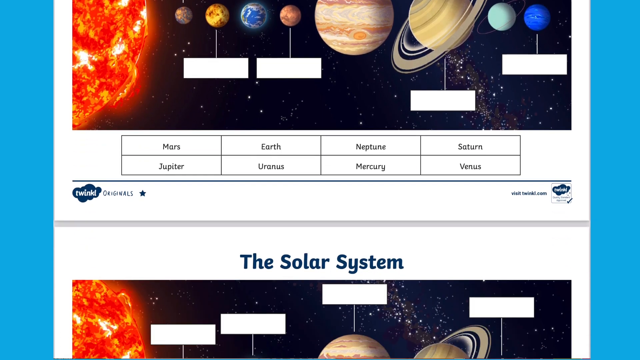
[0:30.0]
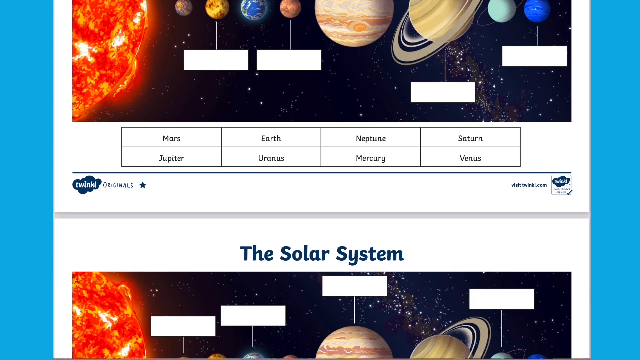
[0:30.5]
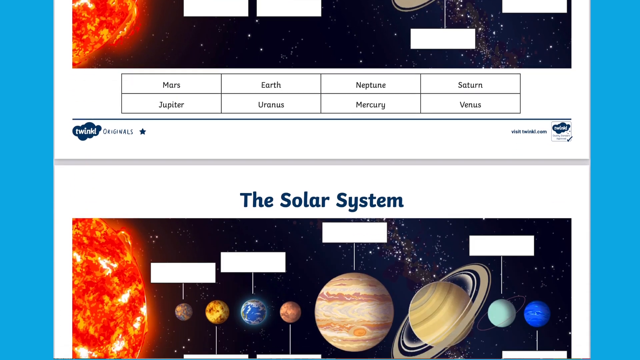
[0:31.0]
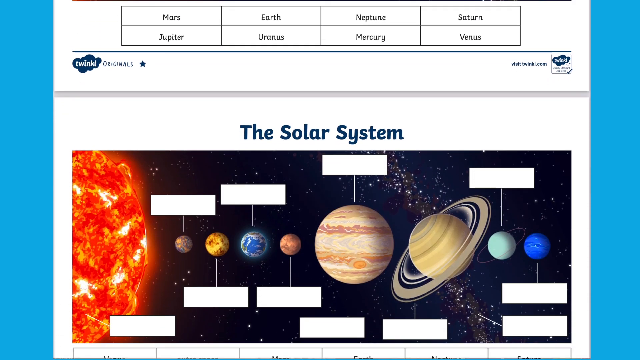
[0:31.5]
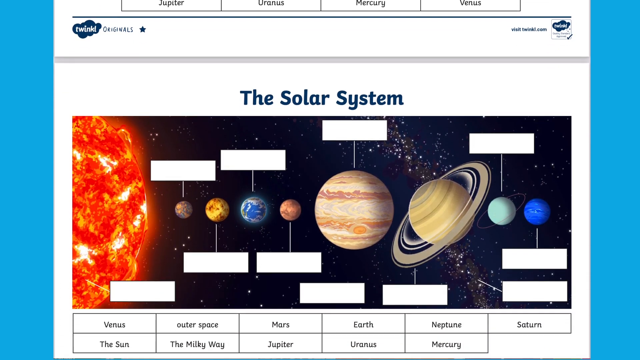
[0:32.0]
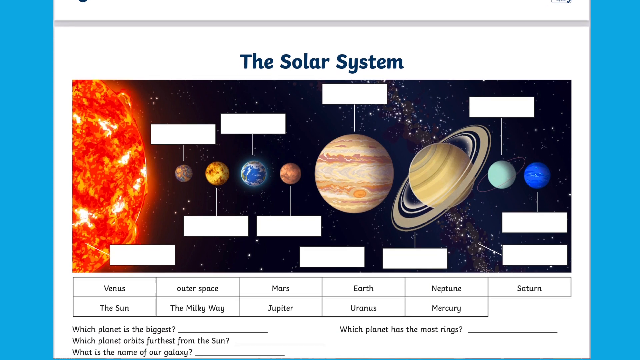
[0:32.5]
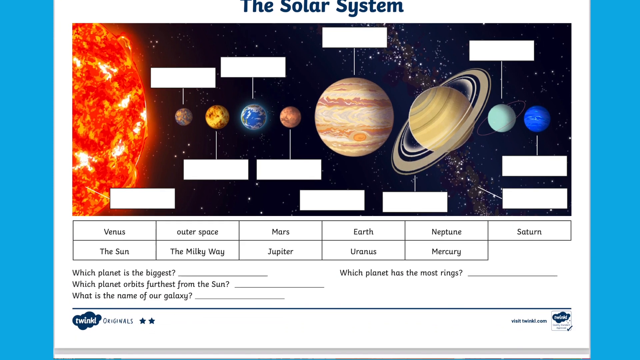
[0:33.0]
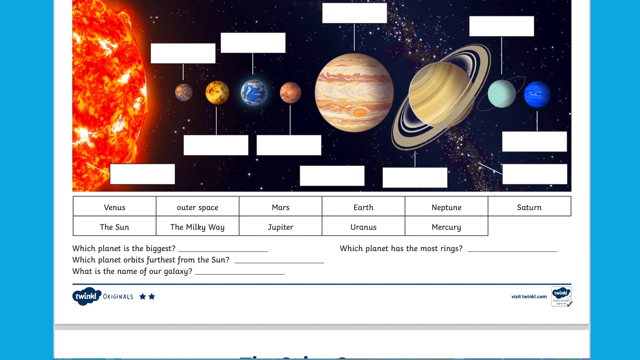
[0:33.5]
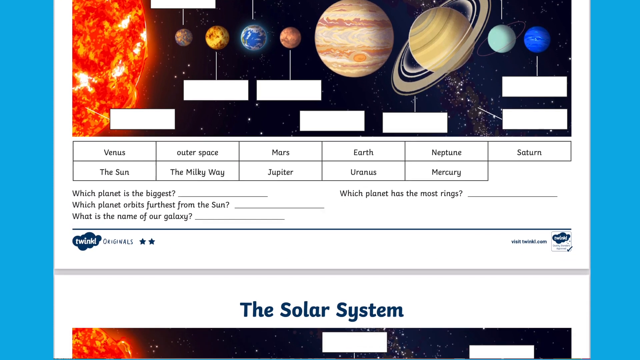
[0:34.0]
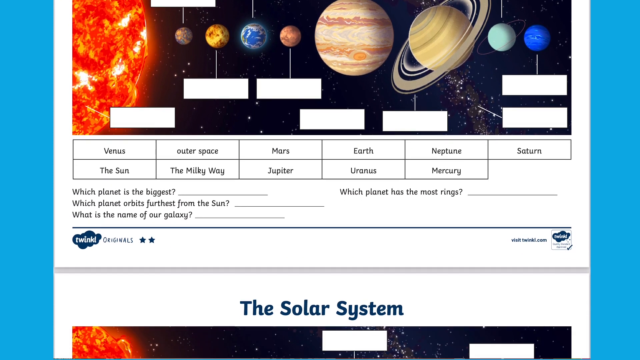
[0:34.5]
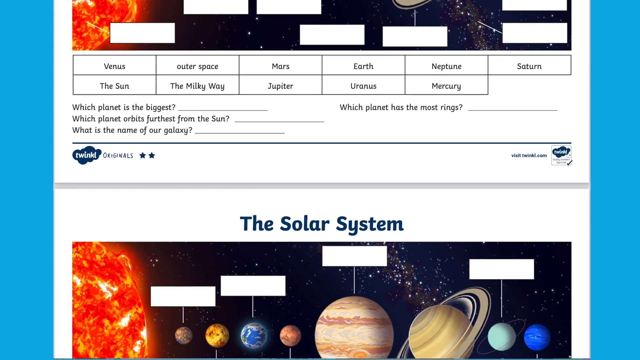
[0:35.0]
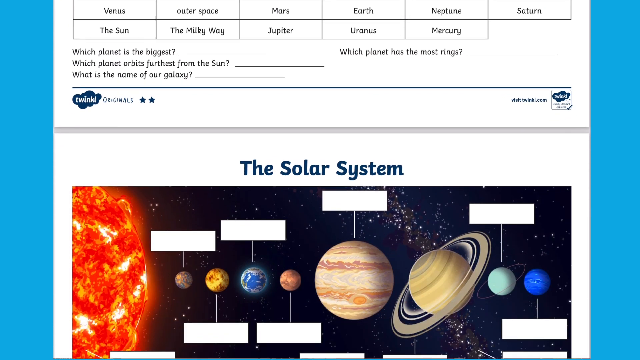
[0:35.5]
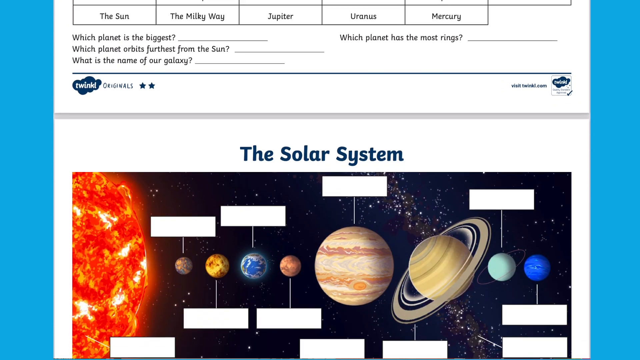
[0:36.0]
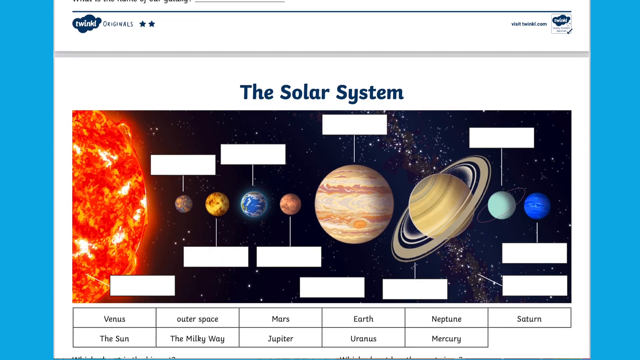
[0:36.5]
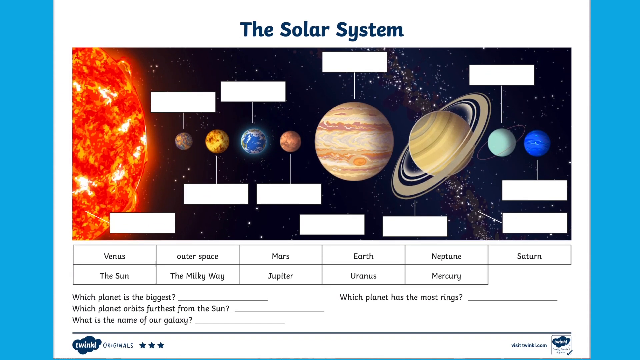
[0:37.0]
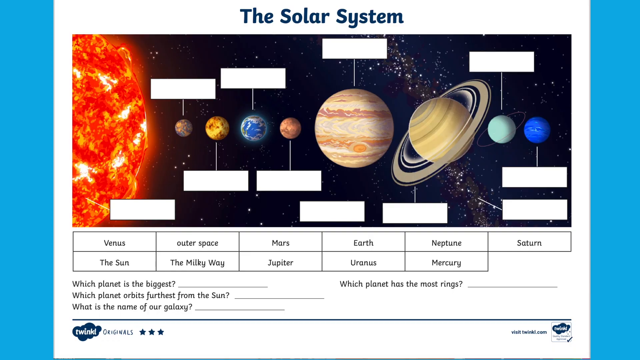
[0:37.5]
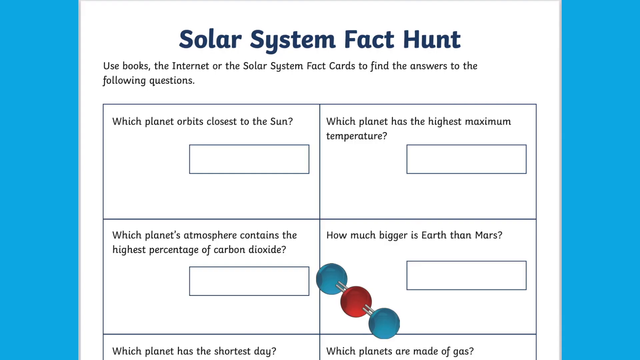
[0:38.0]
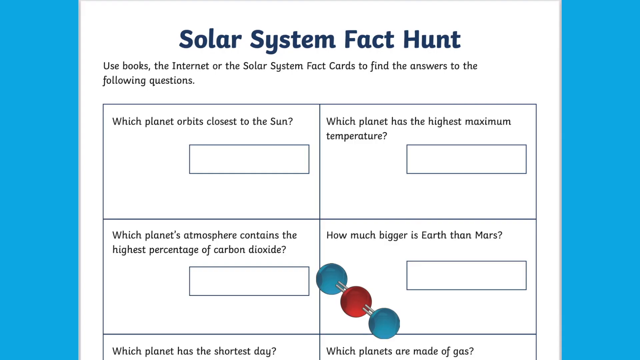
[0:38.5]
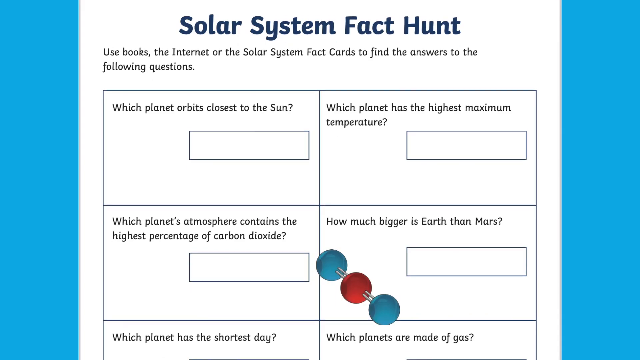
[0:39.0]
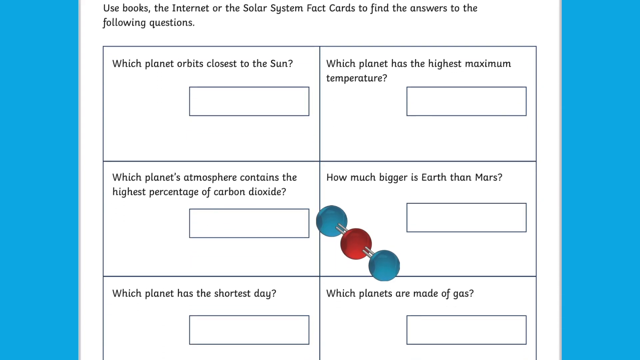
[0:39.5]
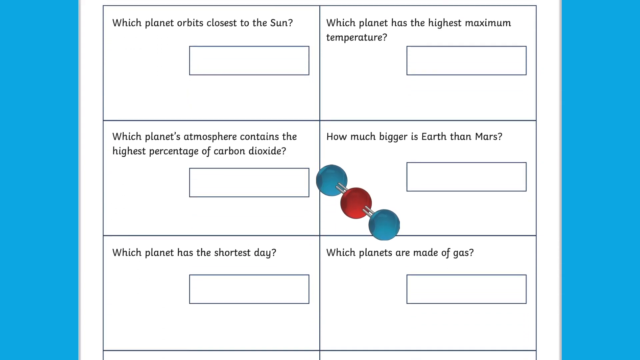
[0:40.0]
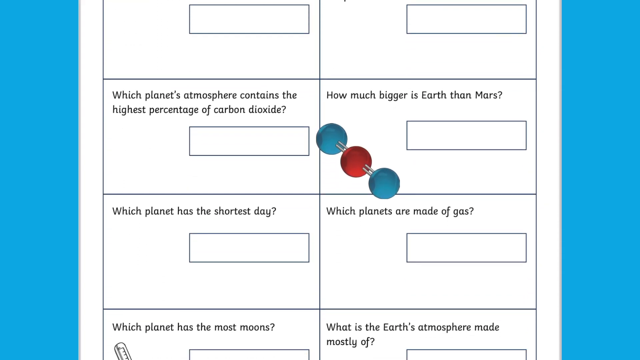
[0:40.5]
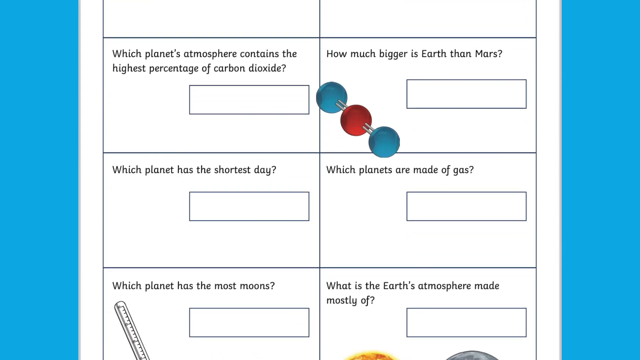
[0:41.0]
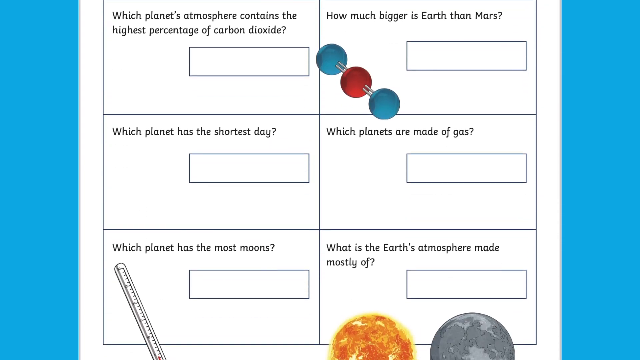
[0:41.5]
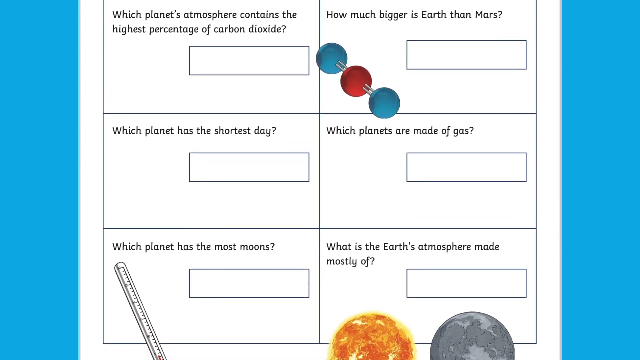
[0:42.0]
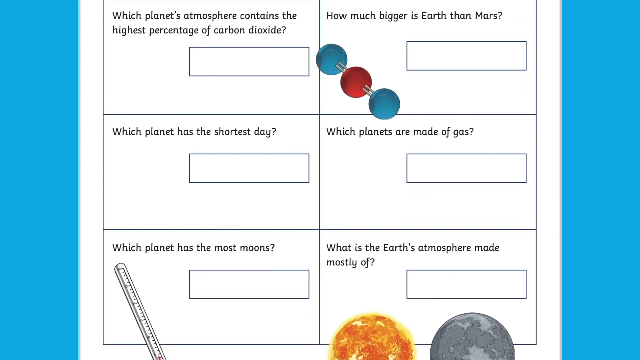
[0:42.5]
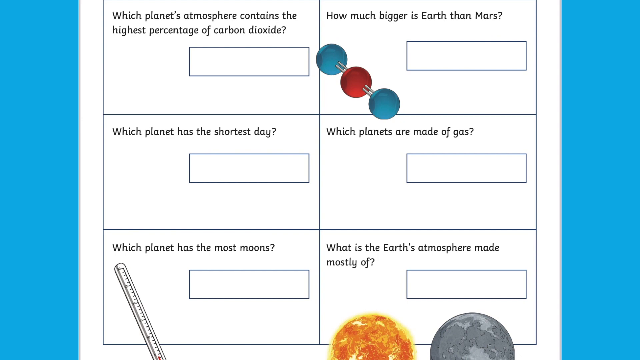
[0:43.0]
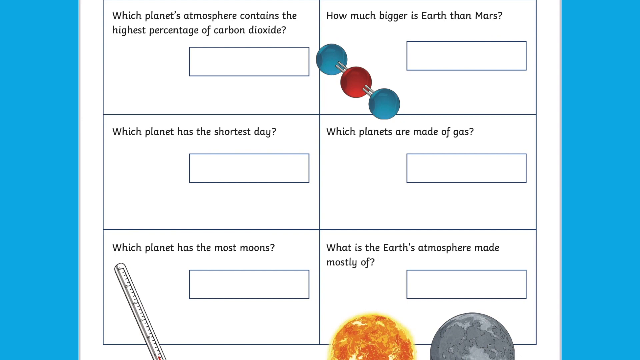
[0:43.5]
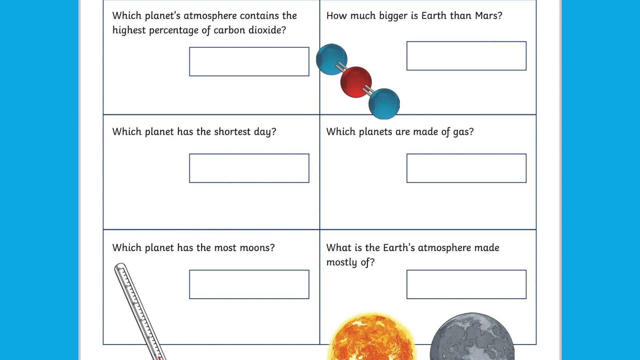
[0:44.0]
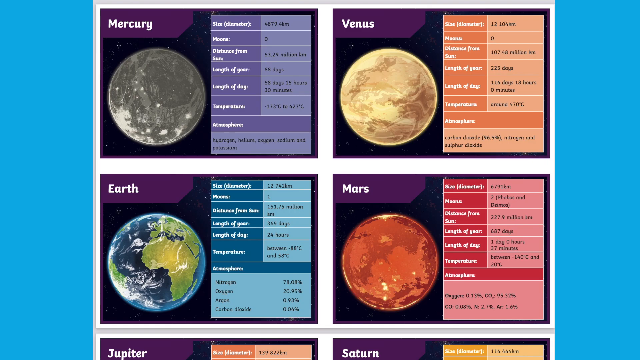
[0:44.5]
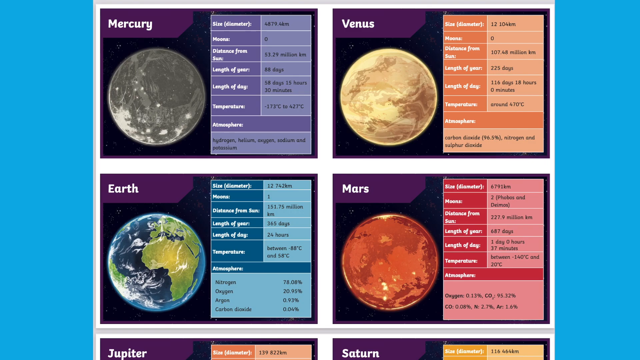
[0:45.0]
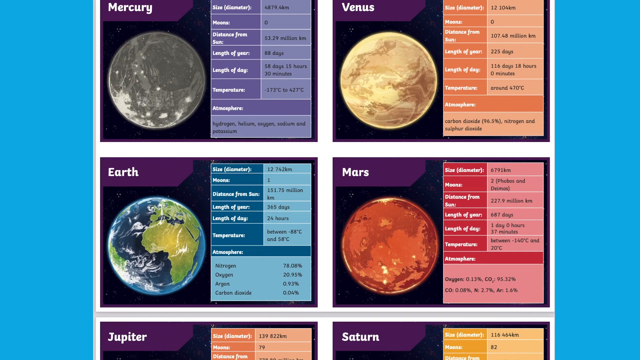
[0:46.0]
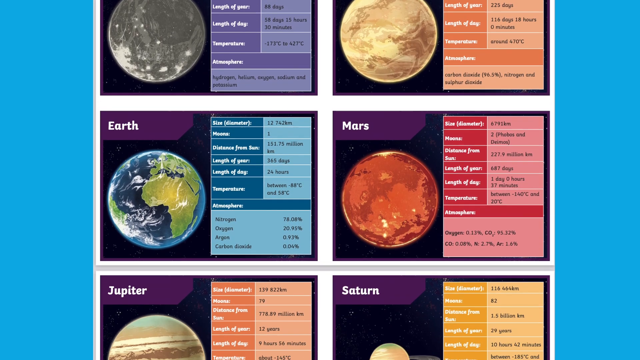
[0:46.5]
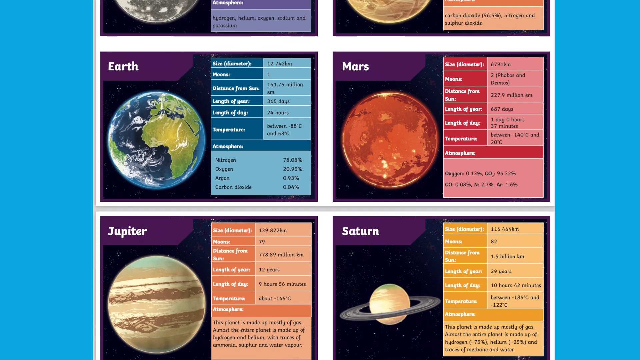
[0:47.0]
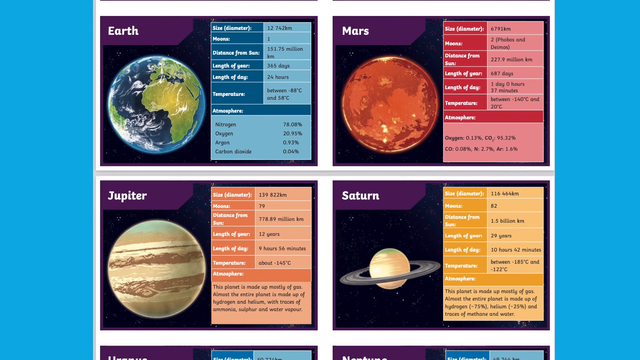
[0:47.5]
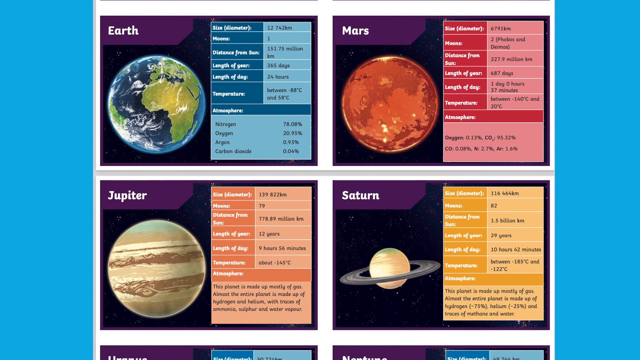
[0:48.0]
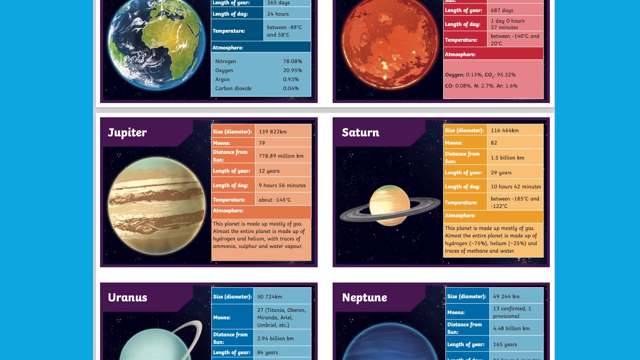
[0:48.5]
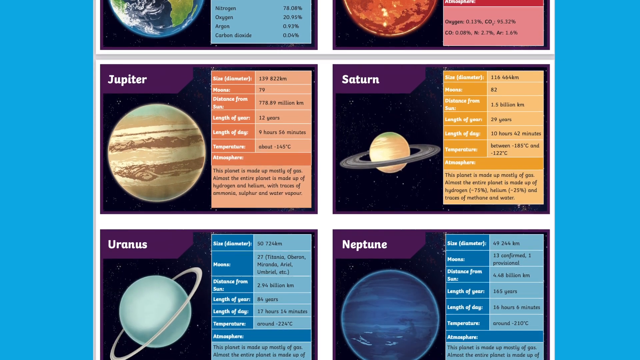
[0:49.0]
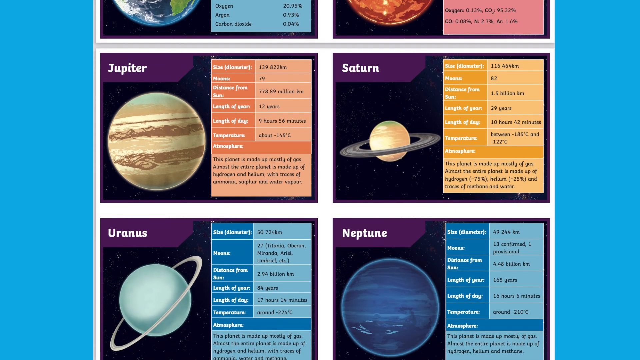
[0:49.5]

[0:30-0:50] A printable page from the educational website shows the solar system with all of the planets, their names along the bottom, and a line under each planet pointing to it so the planet's name can be filled in. Scrolling down, one page says "the solar system". A solar system fact hunt page follows, reading "use books the internet or the solar system fact card to find answers to the following questions". Its questions include "which planet orbits closest to the sun" and "which planet has the highest maximum temperature". The page scrolls down, showing several questions about the solar system and its planets.